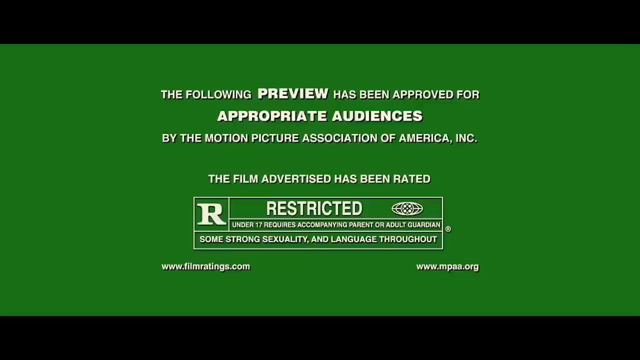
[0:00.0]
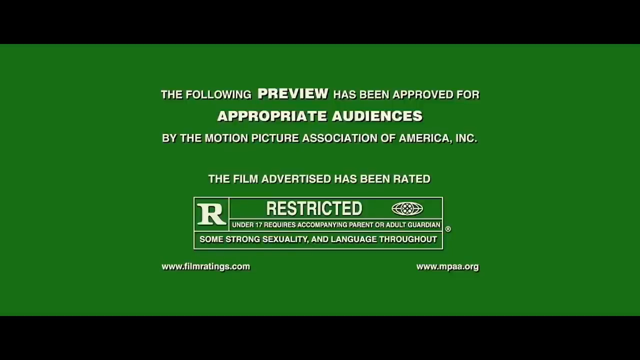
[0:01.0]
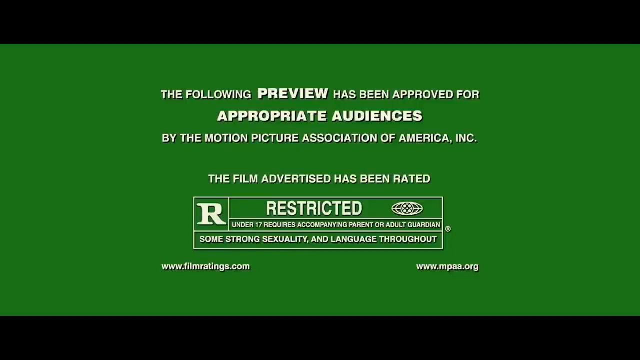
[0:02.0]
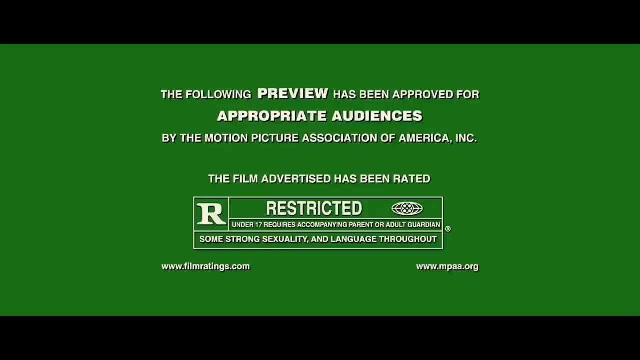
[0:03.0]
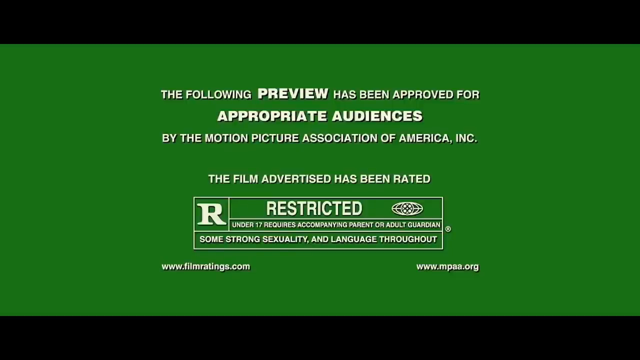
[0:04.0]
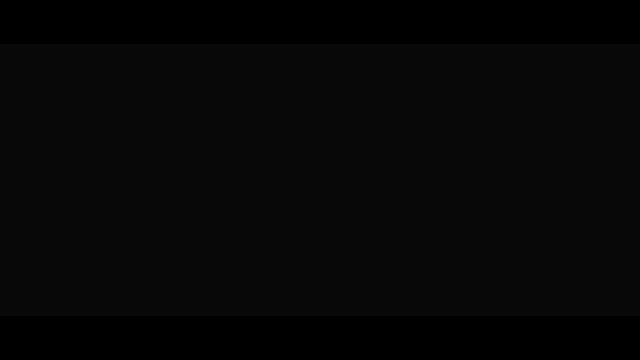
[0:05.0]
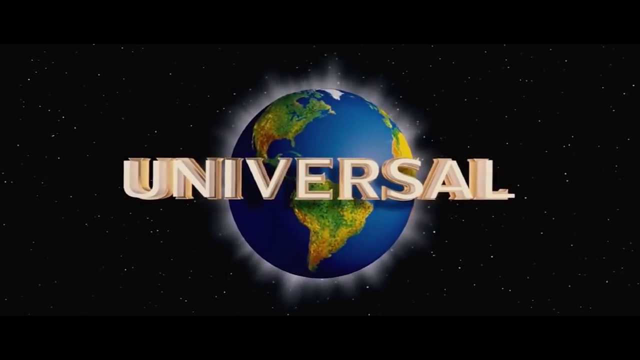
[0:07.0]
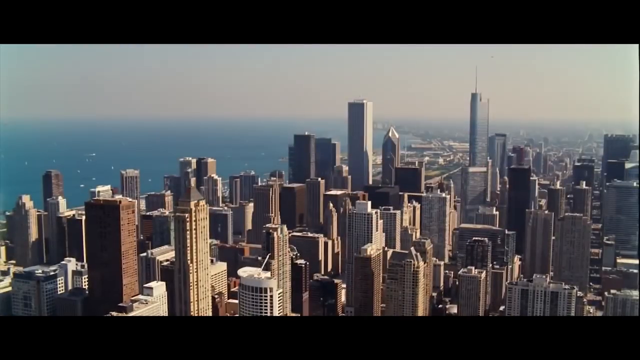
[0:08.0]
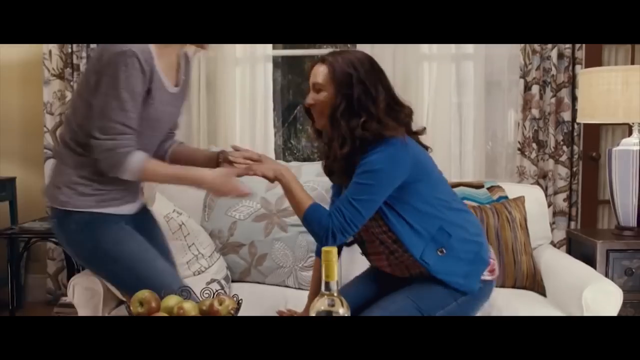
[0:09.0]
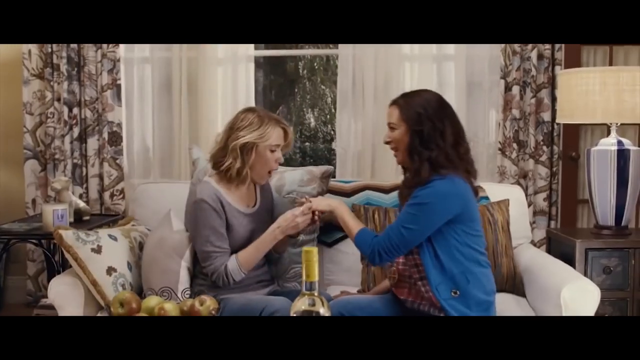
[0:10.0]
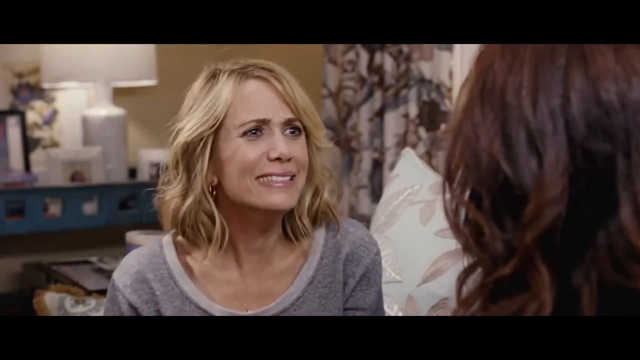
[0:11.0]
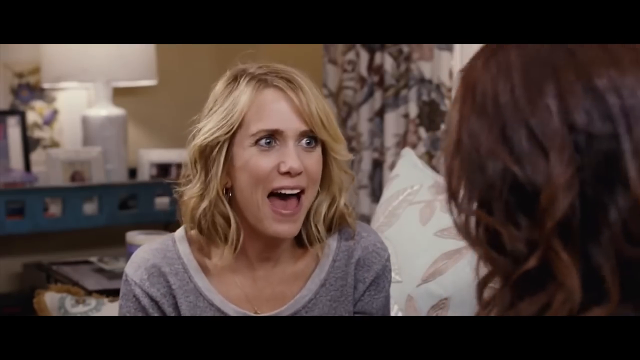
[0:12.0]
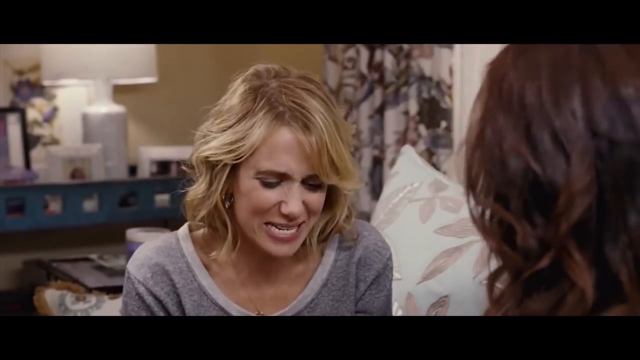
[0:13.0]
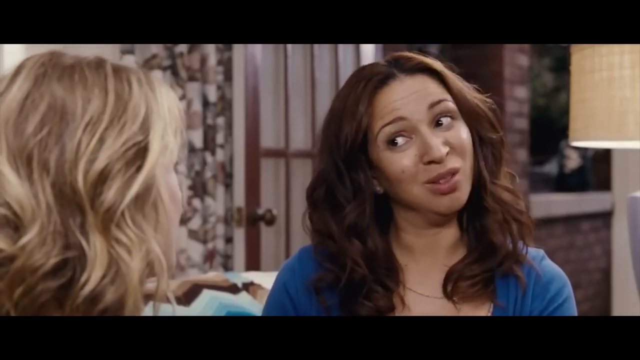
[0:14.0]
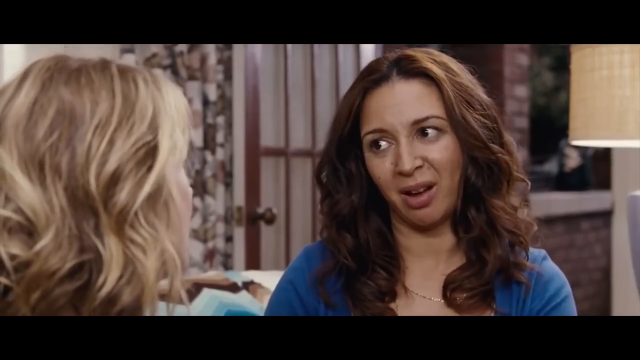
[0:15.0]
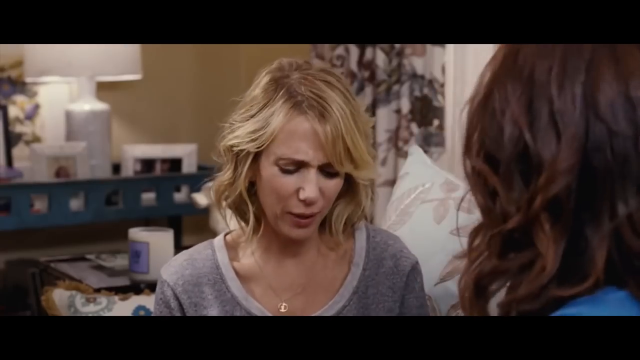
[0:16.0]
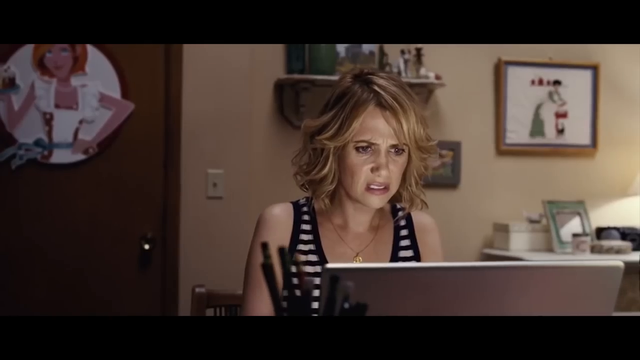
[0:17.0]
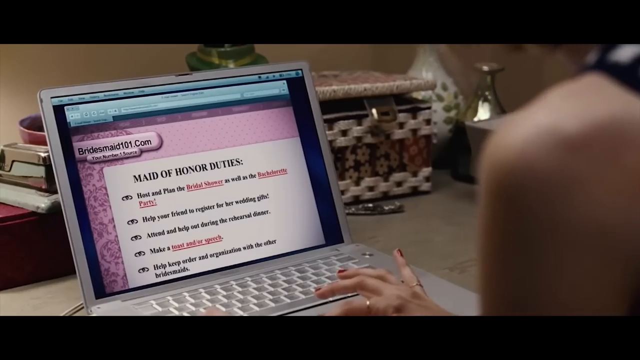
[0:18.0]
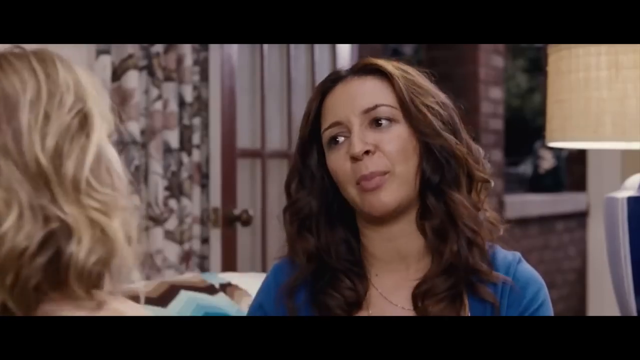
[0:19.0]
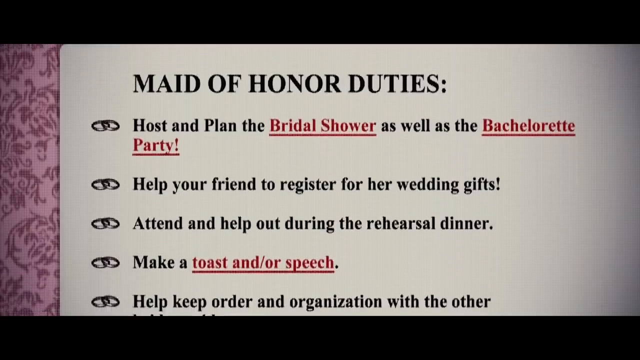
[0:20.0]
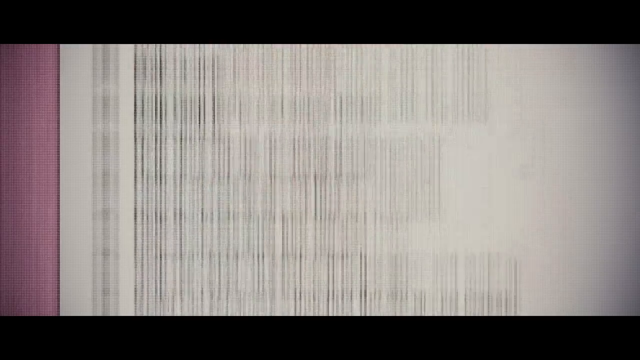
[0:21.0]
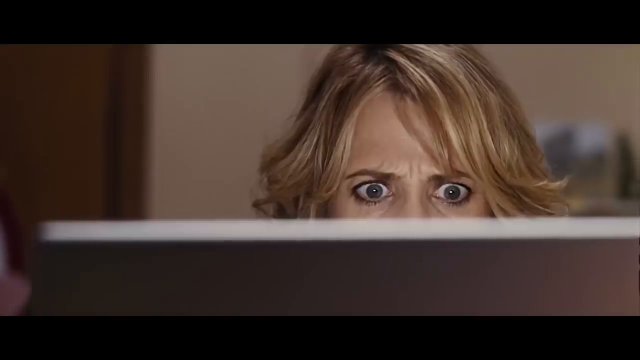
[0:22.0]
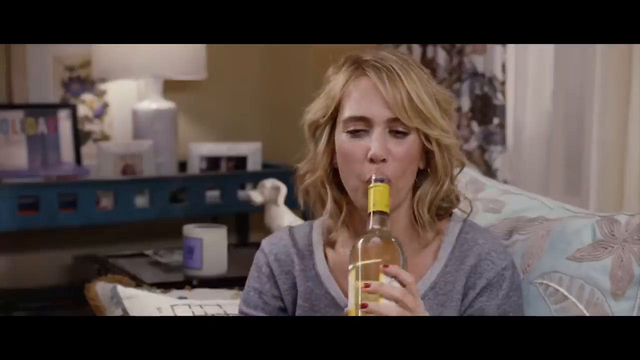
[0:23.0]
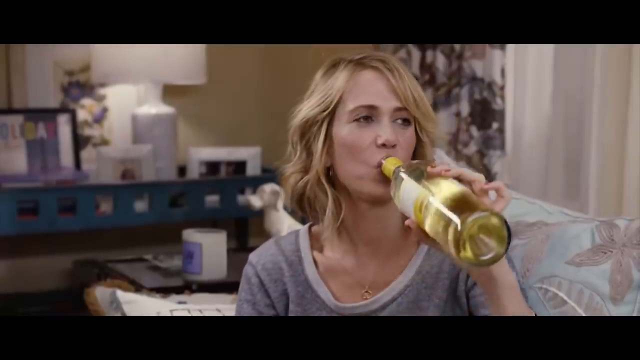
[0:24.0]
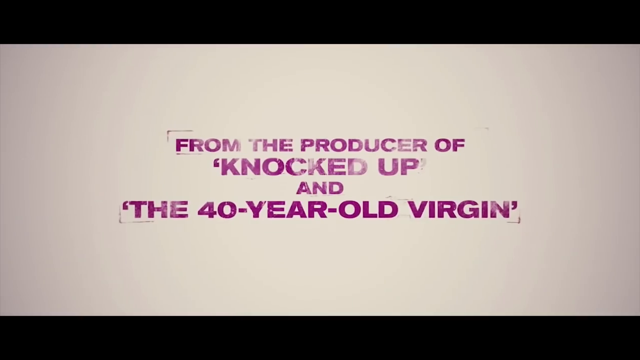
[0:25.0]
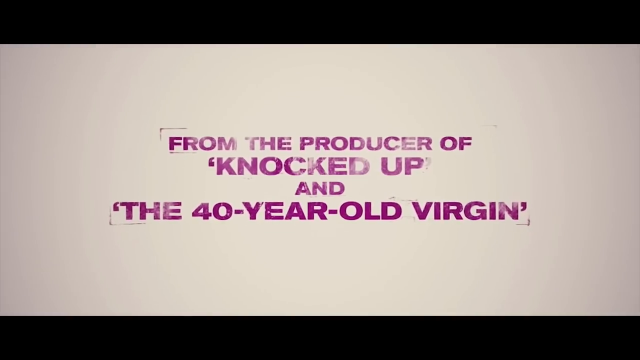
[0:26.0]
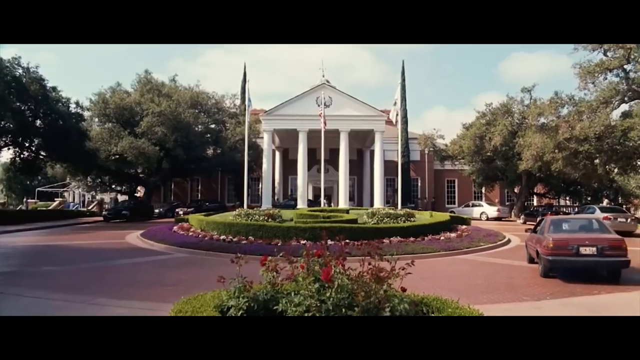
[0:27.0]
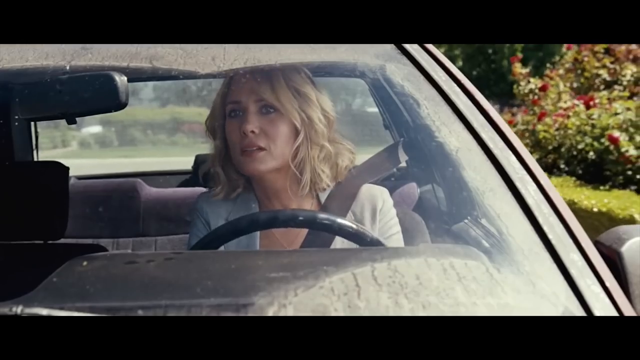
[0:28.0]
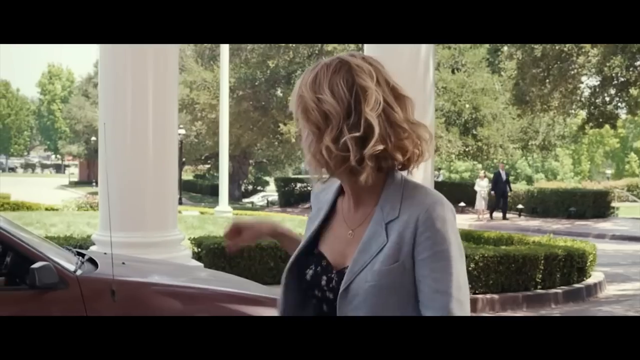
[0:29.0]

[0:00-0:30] The video opens with a restricted R-rating warning before a movie. The screen reads "the following preview has been approved for appropriate audiences" and indicates that it is R-restricted and that "the film has been rated." Next comes the Universal logo with the globes spinning behind it, then a scene that looks like the New York City skyline, and then two girls sitting on a couch talking. One of them scrolls on a computer showing "maid of honor duties," including "plan the bridal shower." The very long list scrolls all the way down to the bottom, where it reads "attend all bridal affairs with the bride," along with "cake and catering." A blonde woman sits behind the computer, looking very concerned at the screen. Then she is on the couch drinking straight from a bottle of wine. Next appears "from the producers of Knocked Up and The 40-Year-Old Virgin," followed by more cut scenes from the movie.